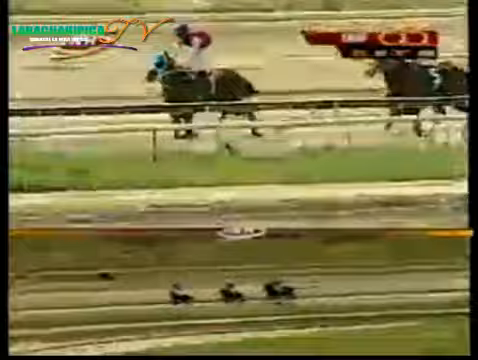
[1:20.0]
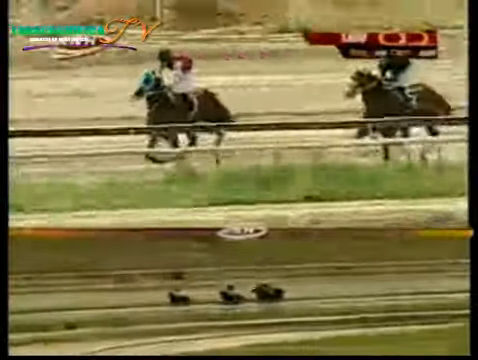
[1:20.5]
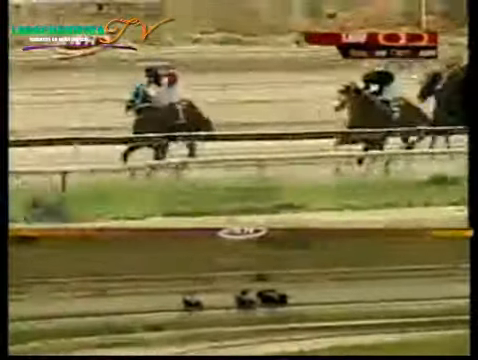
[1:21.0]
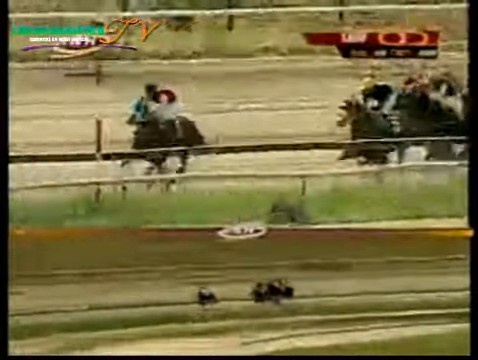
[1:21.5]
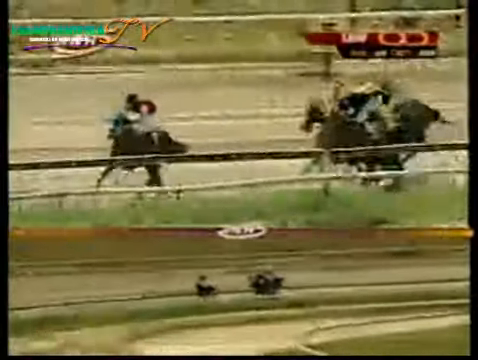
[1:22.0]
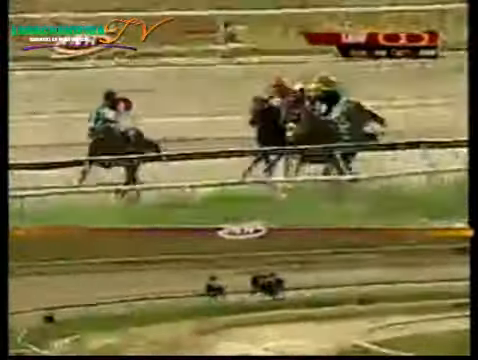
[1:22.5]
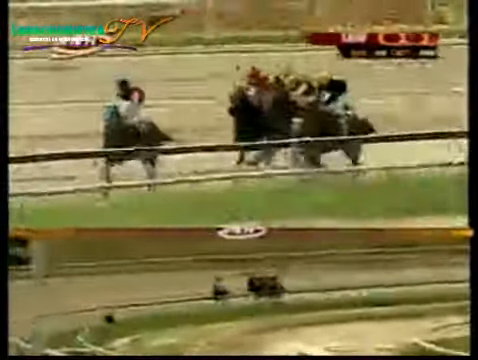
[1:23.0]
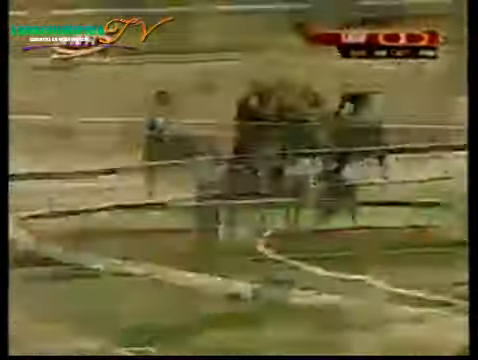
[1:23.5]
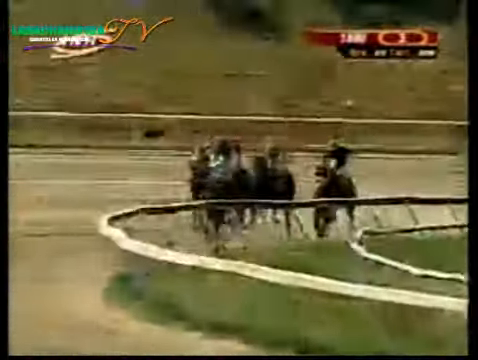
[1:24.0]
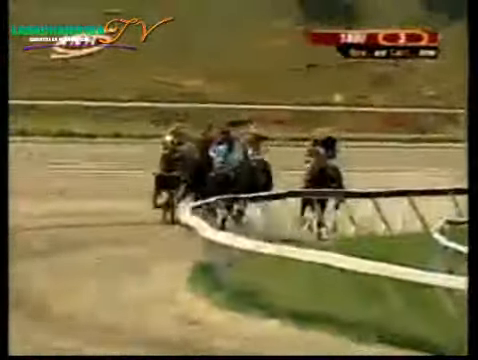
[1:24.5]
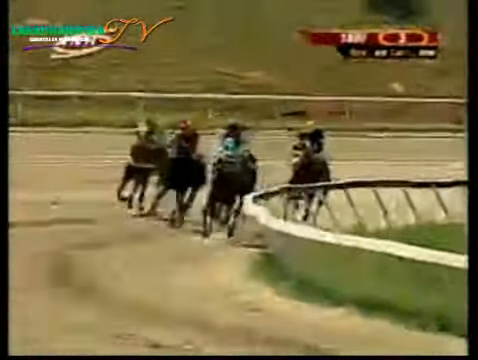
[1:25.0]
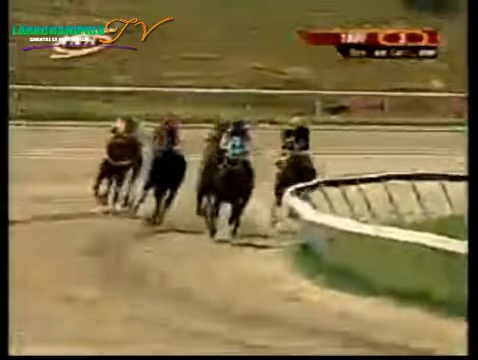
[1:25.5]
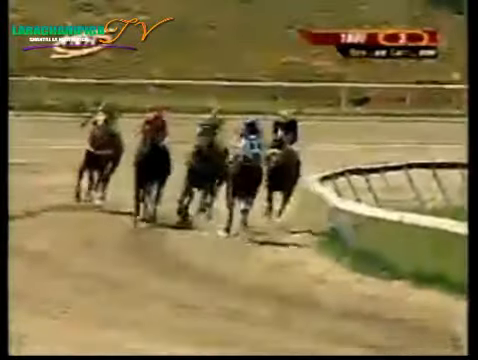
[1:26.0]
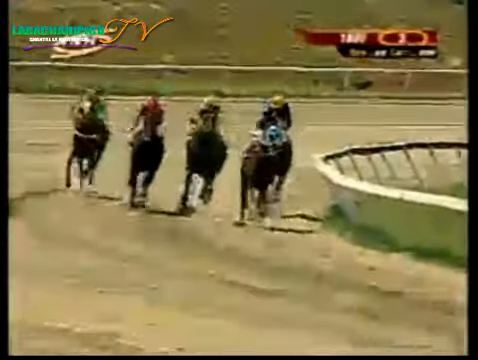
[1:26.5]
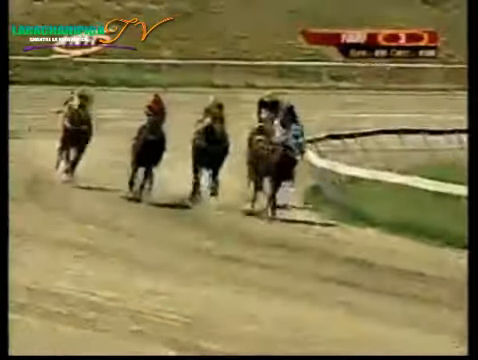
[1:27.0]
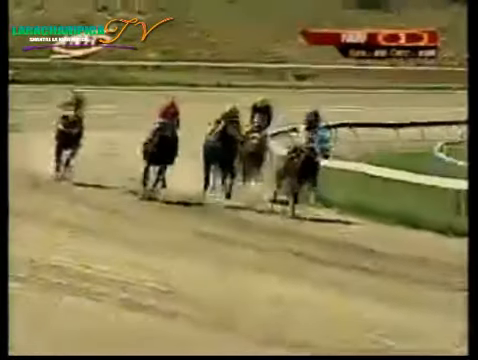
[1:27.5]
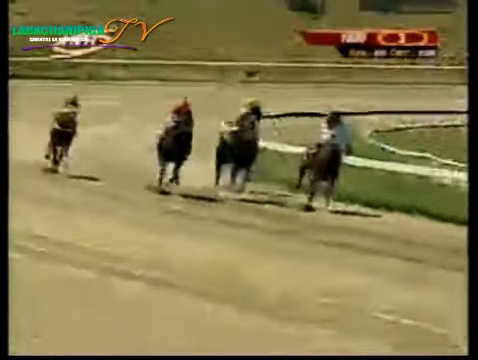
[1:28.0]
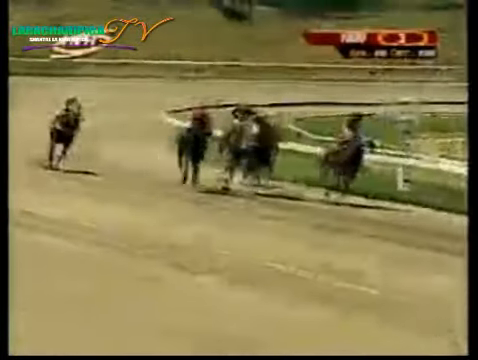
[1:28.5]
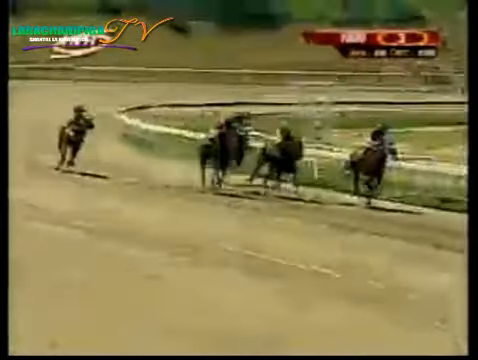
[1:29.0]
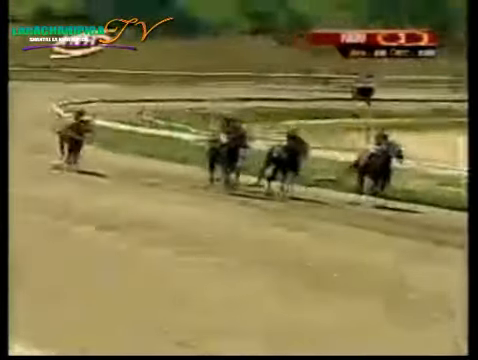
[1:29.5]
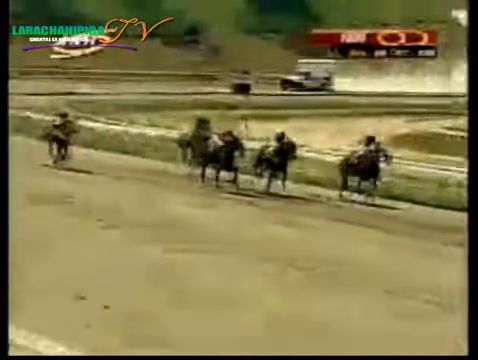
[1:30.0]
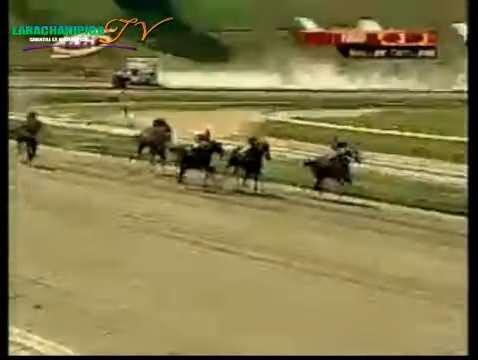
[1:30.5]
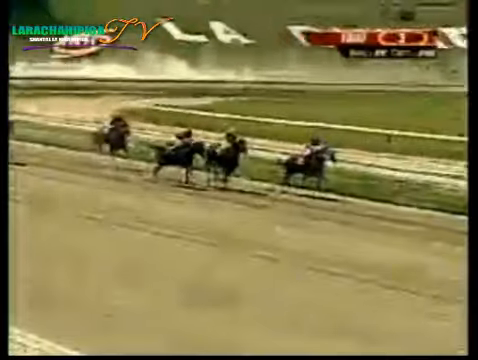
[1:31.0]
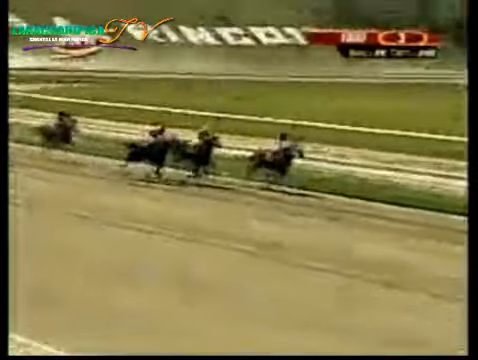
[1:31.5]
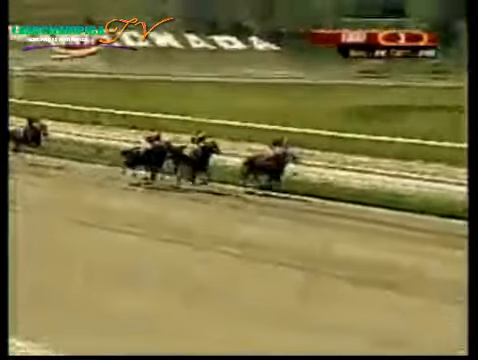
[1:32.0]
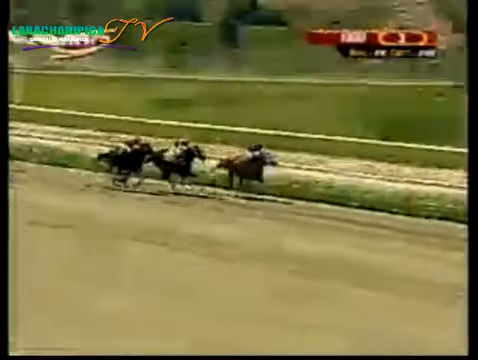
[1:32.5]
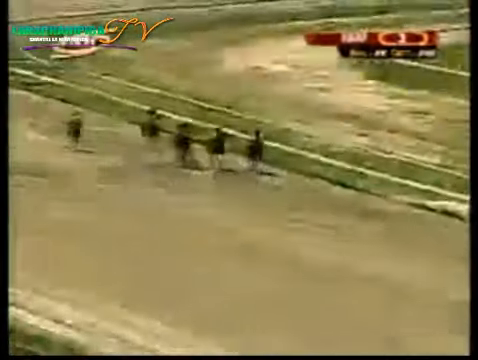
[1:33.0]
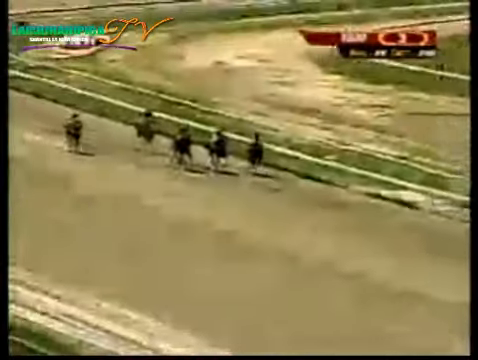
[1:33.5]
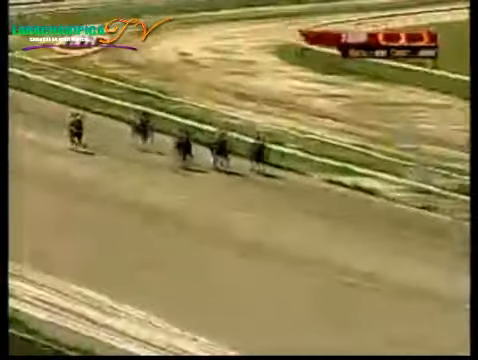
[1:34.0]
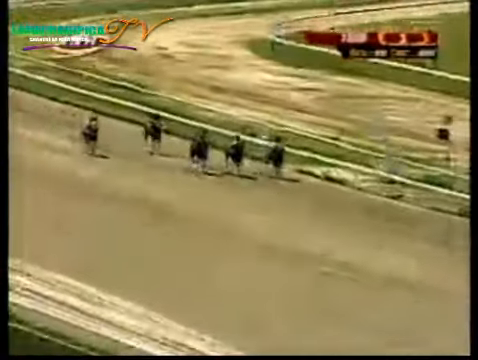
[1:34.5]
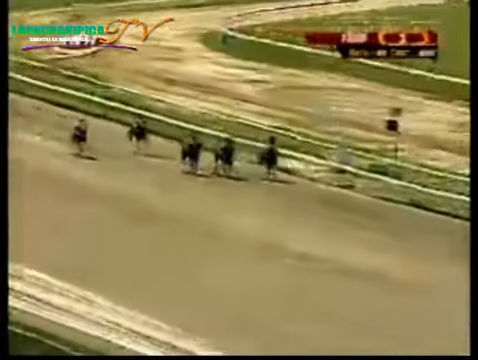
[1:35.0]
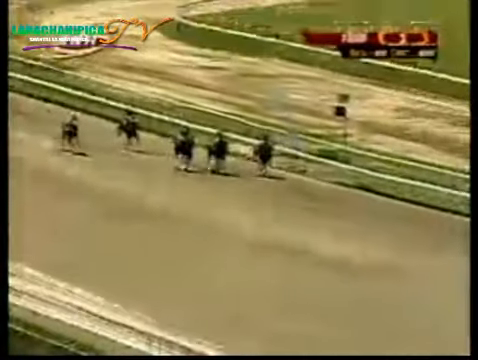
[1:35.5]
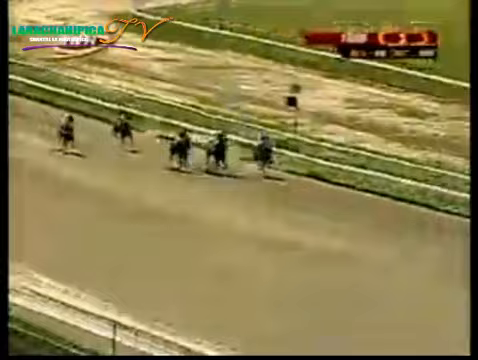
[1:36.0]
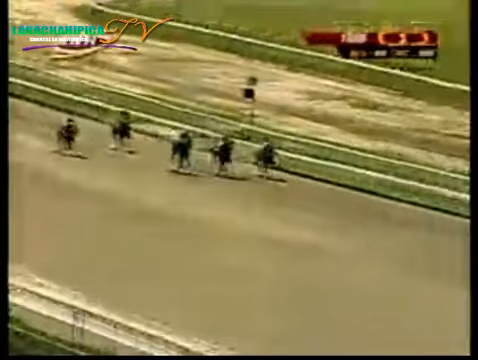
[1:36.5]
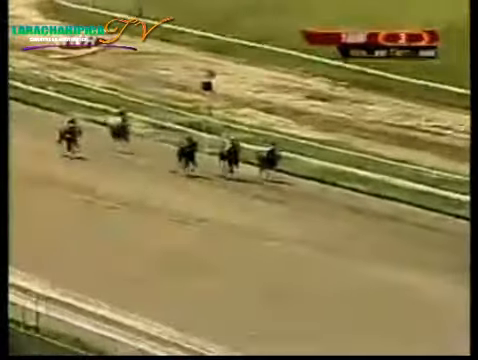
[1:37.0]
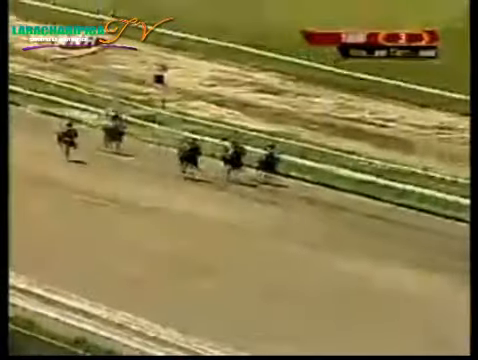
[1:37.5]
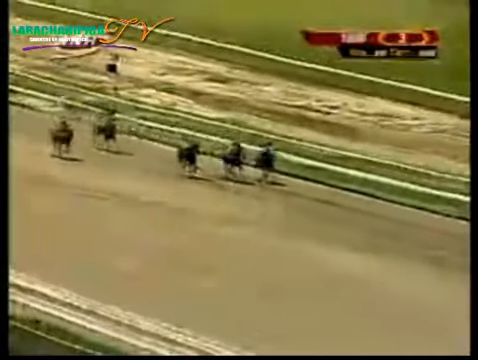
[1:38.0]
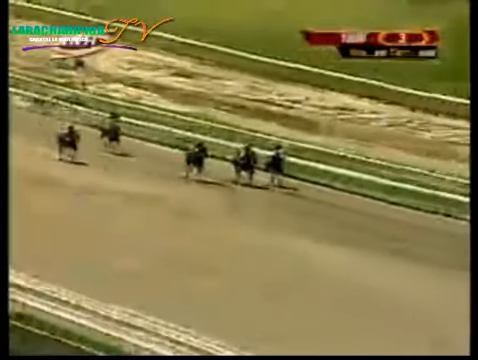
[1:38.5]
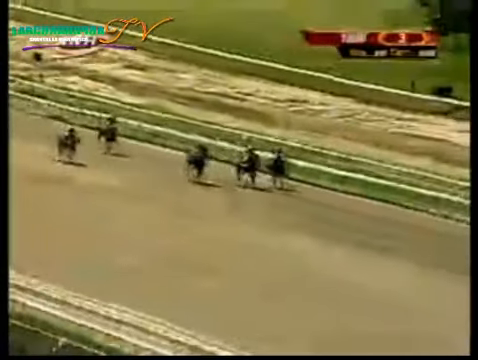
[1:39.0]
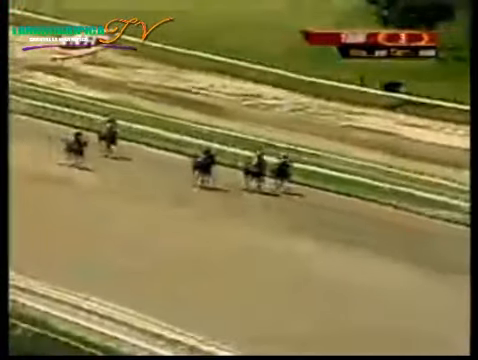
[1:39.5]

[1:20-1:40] The new leading horse continues in first place. The horses are shown from a front view as they turn a corner. One horse, with the blue mask, is clearly in the lead and the others follow: three horses in the middle and a clear last-place horse a few steps behind fourth place. The horses are then shown from a side view again as the camera follows them, and after that from a different angle, much higher and farther away, looking downward on the horses and the track. The horse with the blue mask continues to lead, but toward the end a horse appears to be catching up to it.